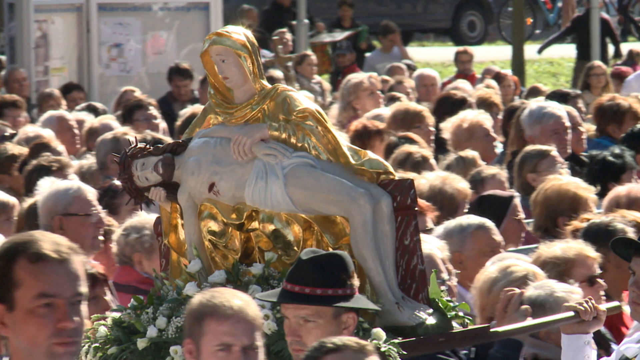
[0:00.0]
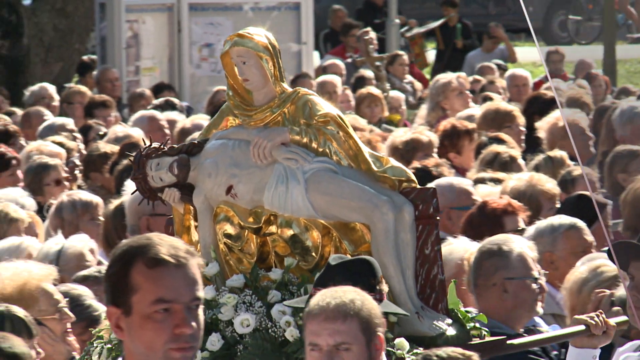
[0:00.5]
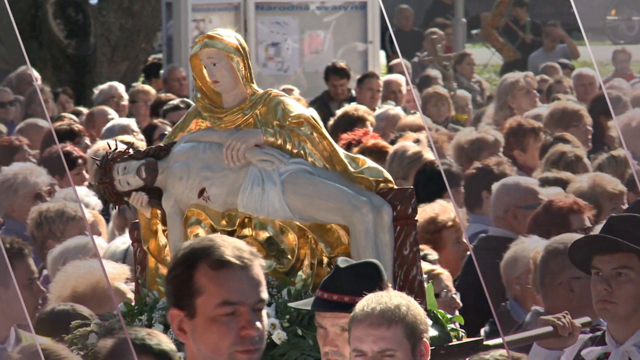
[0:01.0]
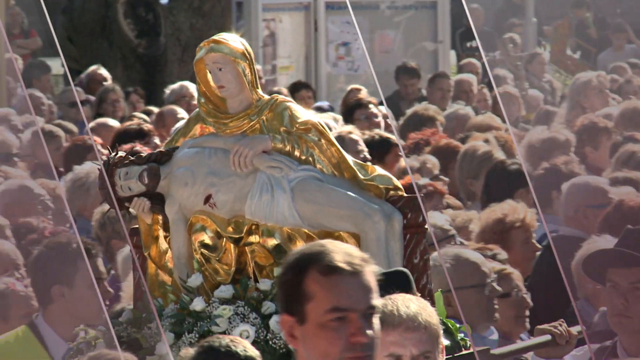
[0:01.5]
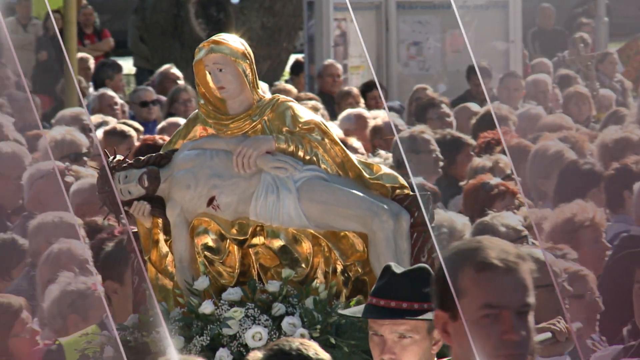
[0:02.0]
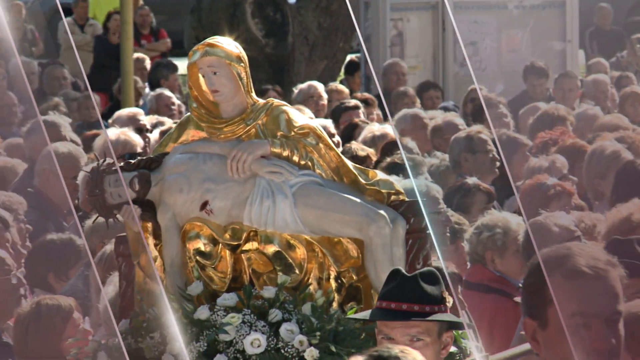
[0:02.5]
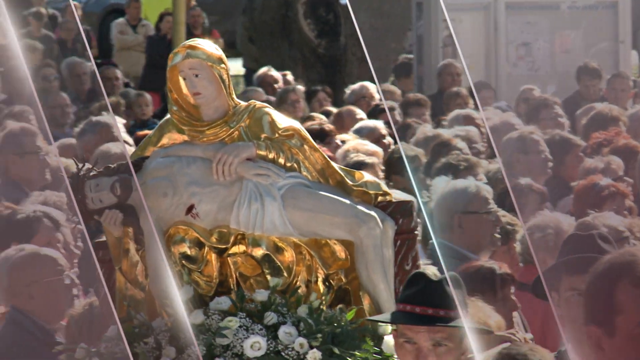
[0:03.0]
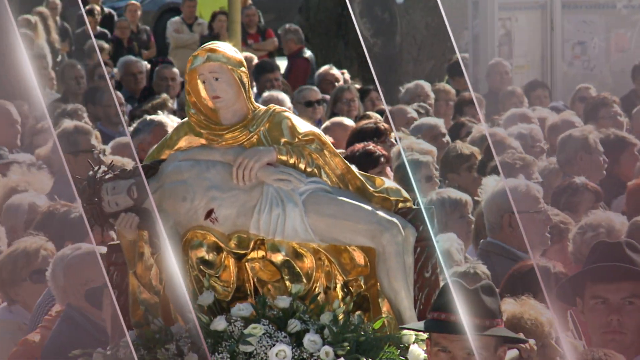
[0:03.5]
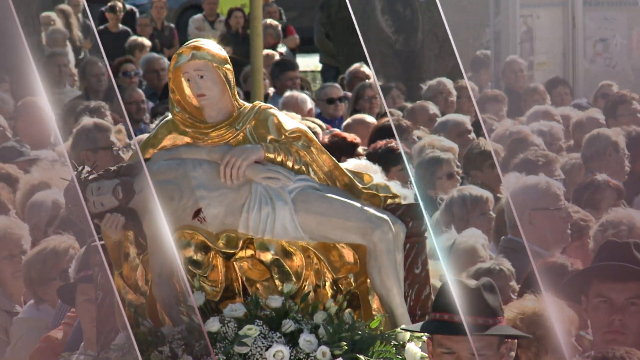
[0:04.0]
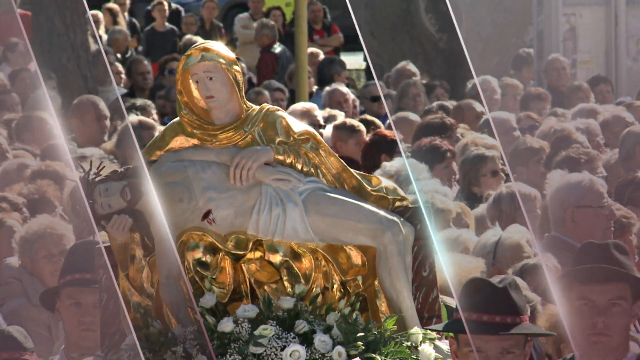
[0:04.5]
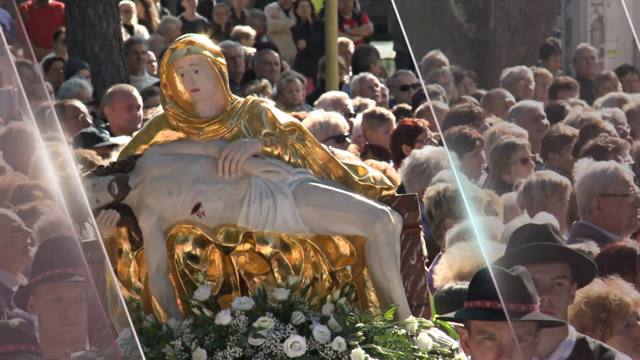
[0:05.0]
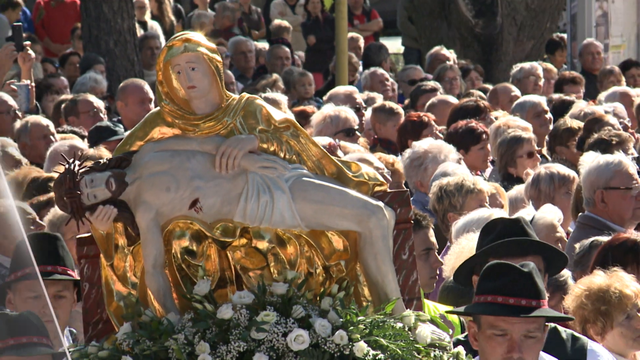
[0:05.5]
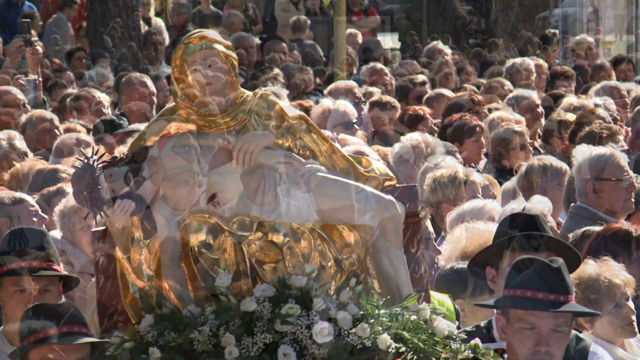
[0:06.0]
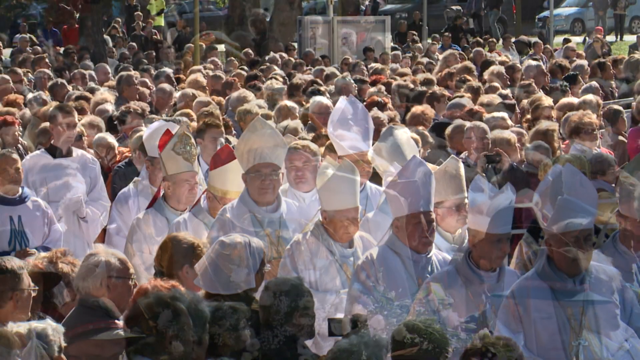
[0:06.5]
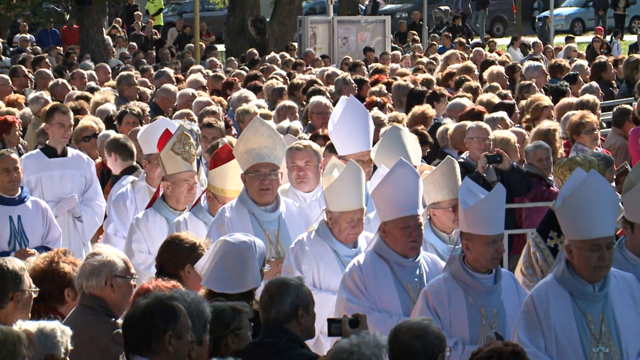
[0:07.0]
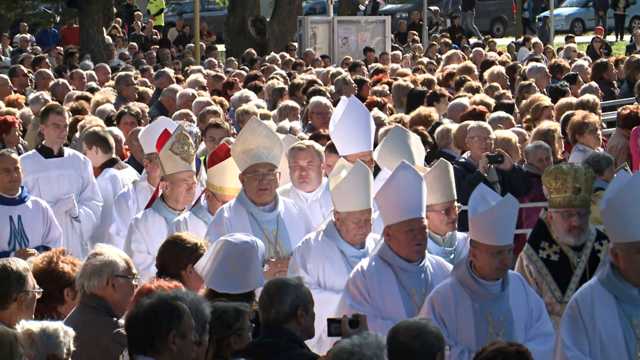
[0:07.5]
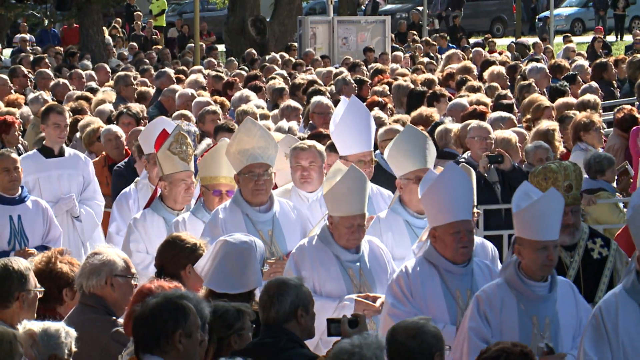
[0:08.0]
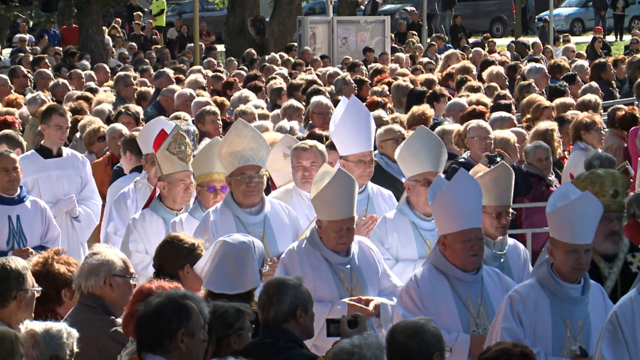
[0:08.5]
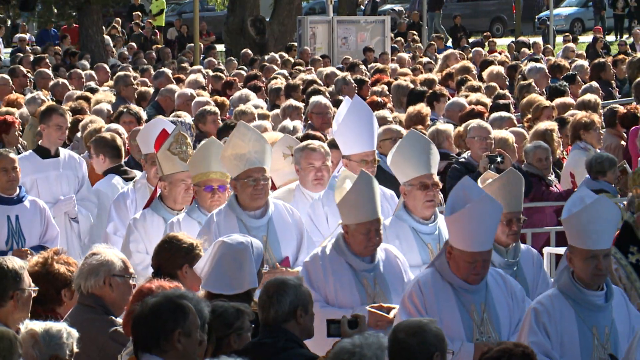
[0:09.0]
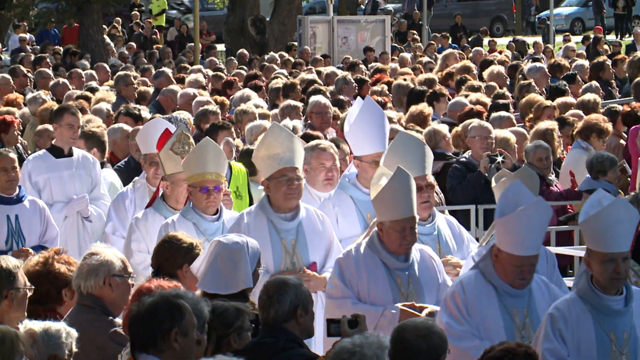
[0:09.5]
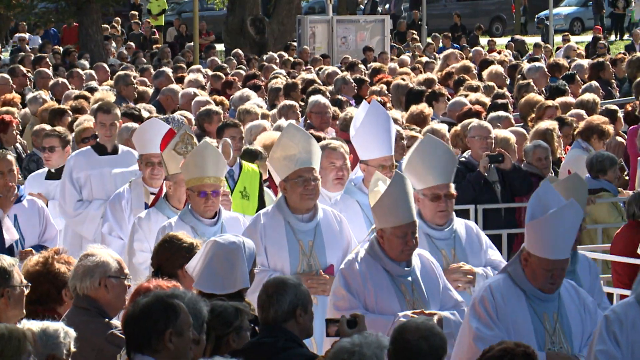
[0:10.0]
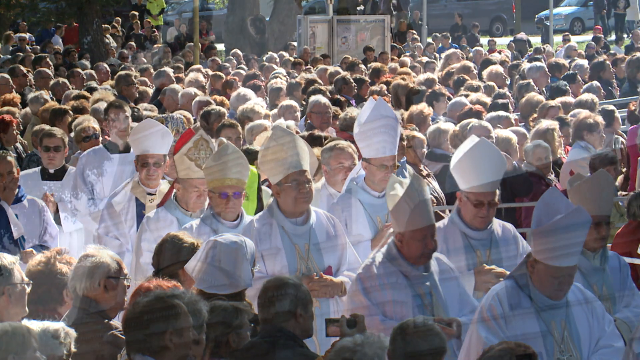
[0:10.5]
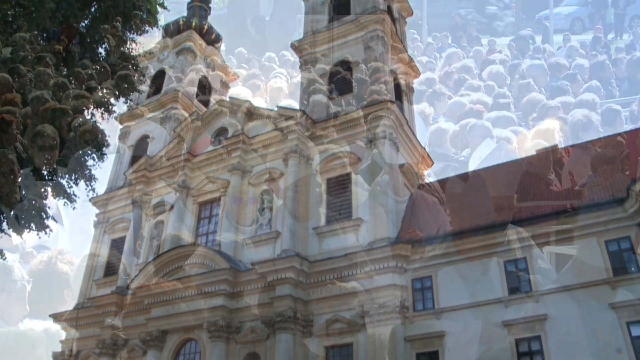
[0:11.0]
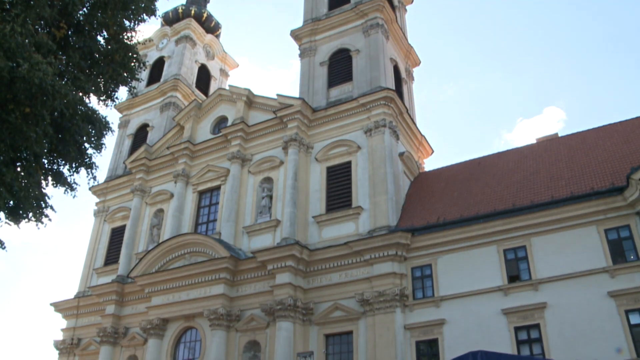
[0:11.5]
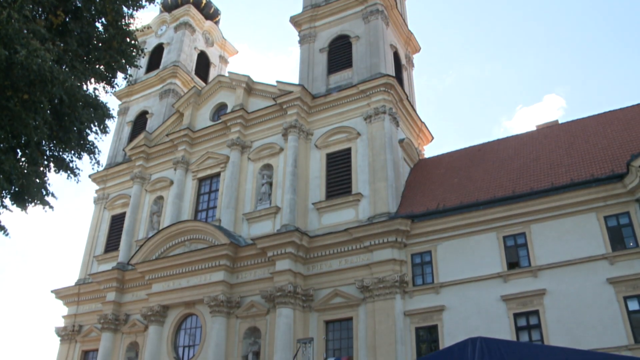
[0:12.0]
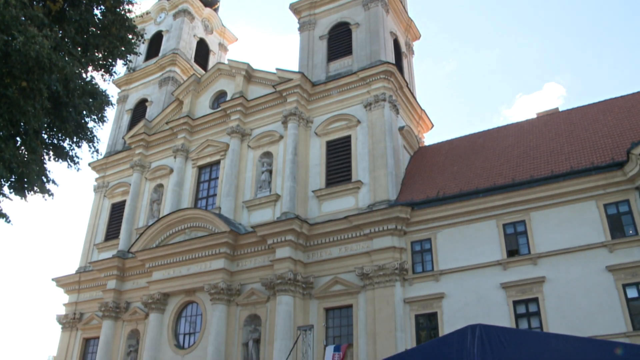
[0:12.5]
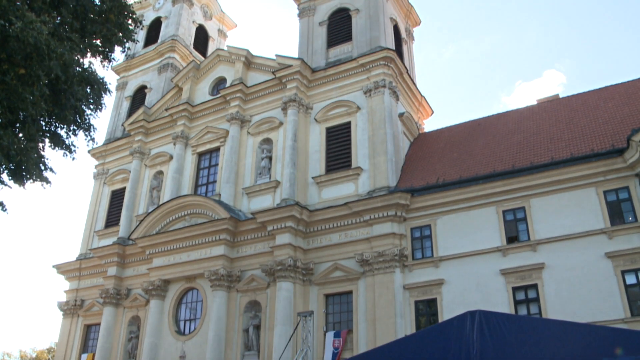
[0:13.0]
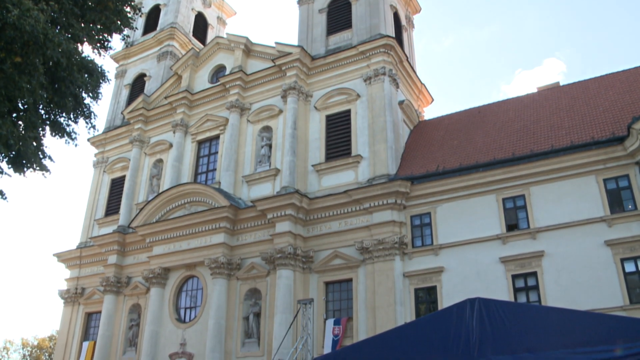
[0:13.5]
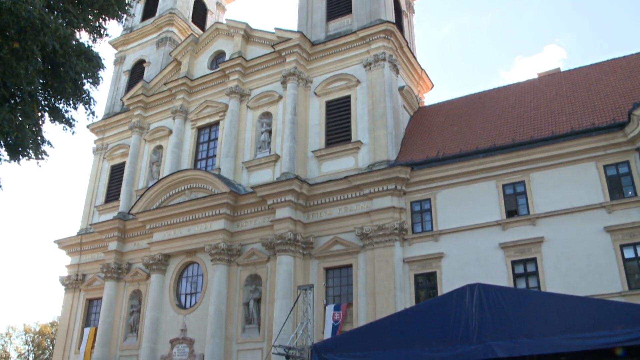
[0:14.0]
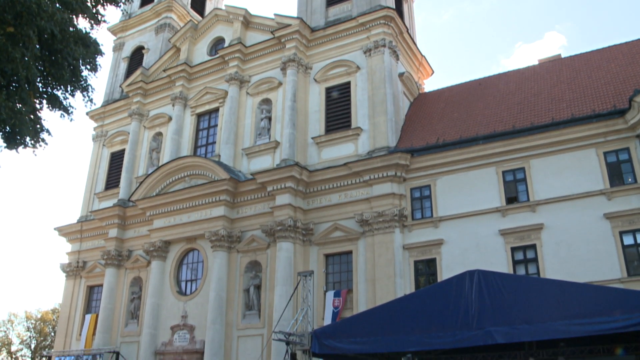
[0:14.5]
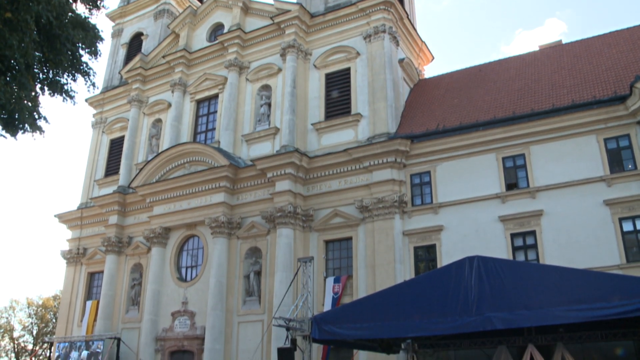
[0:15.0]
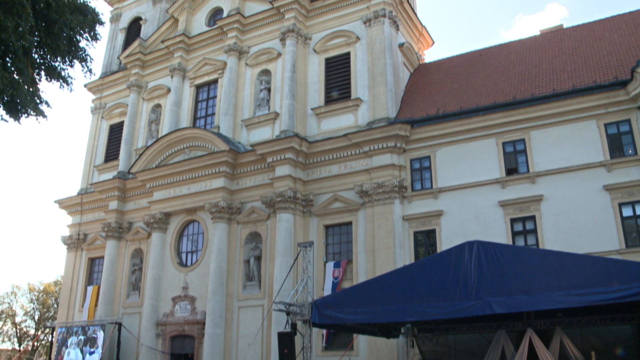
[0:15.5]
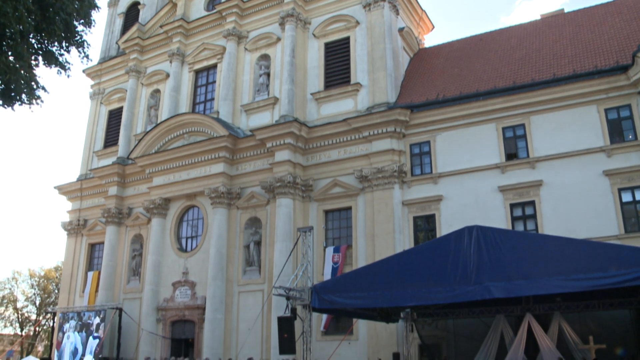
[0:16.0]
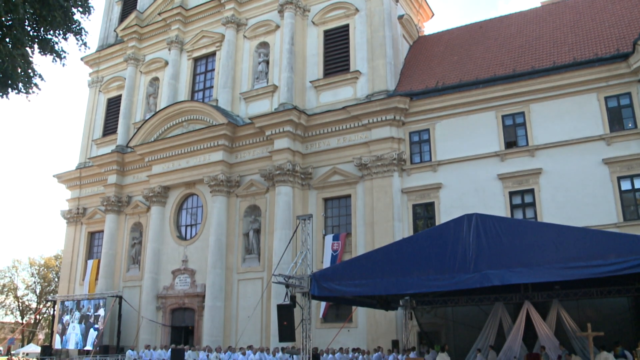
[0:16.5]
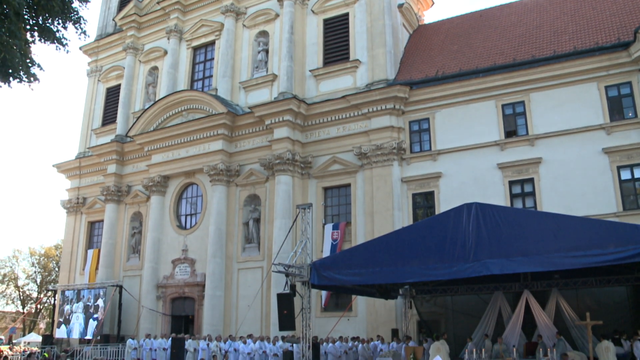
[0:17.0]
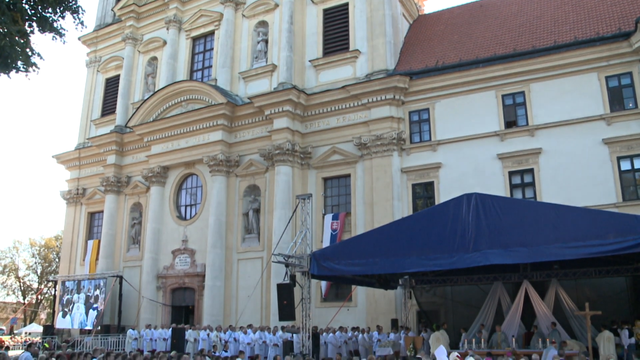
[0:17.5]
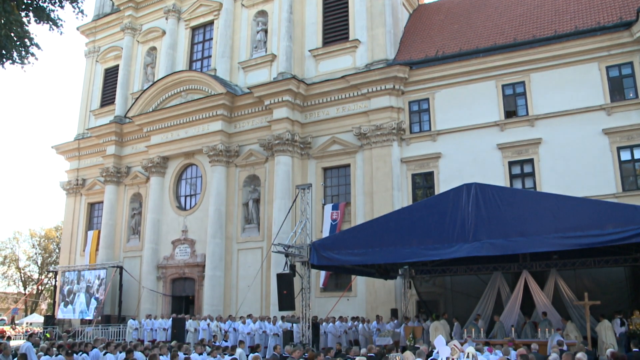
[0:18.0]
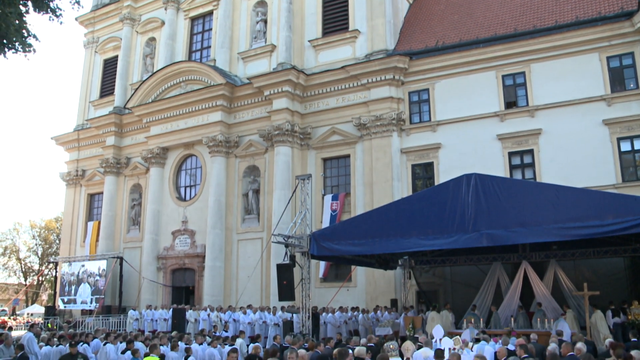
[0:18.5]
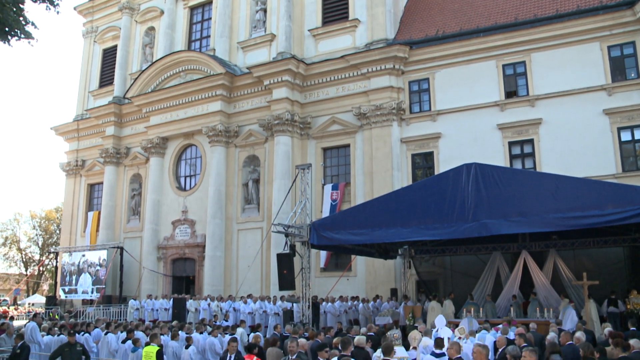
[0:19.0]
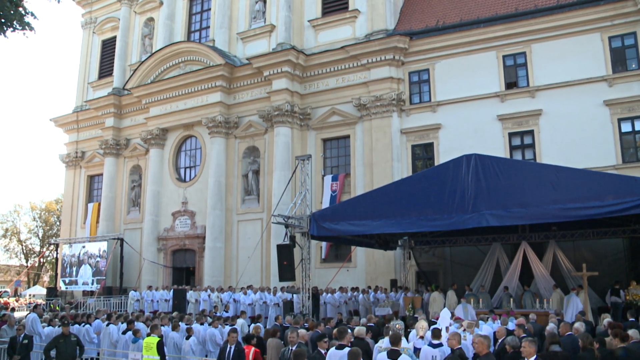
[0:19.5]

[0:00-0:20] A gathering appears to depict the crucifixion of Jesus. A figure draped in gold is visible, possibly his mother. The Jesus figure has a pierced side and thorns on his head, and people carry it through the crowd while others watch. A group of people, possibly clergy, wear white, with some type of cap or hat on their heads; the caps are decorated in different ways, possibly showing rank. A screen plays something, perhaps showing what is happening for people too far back to see well.